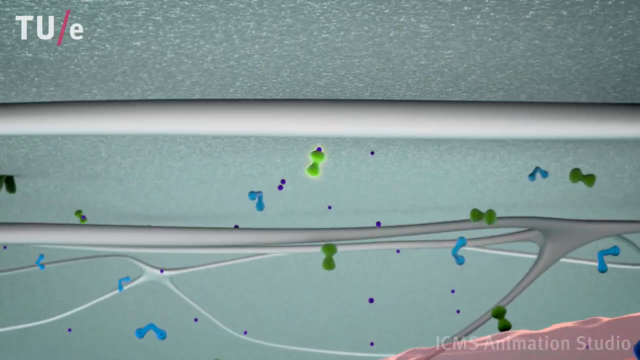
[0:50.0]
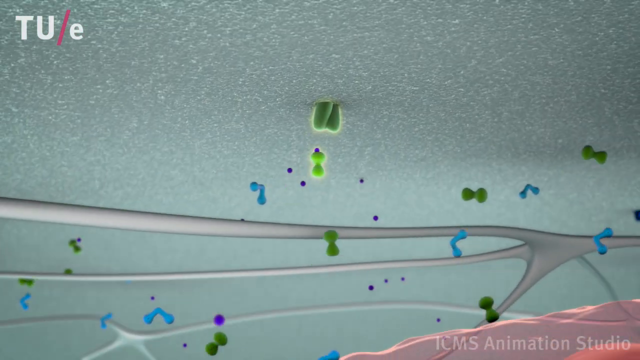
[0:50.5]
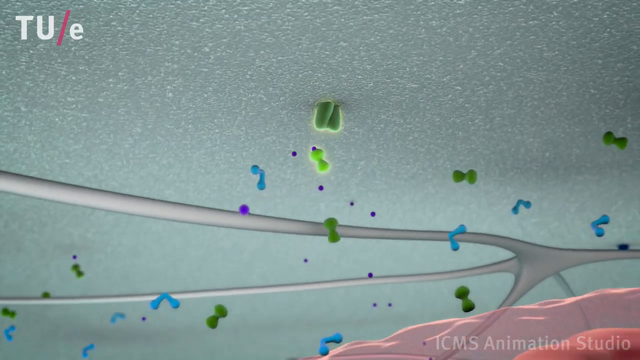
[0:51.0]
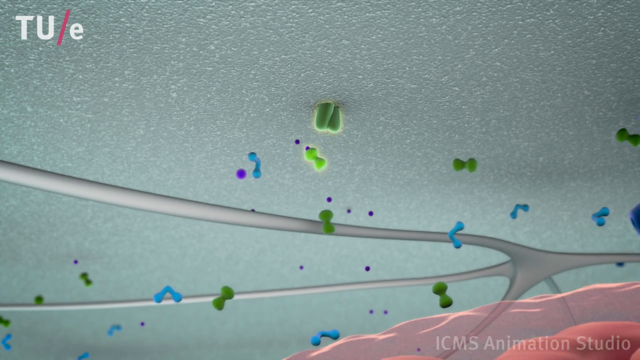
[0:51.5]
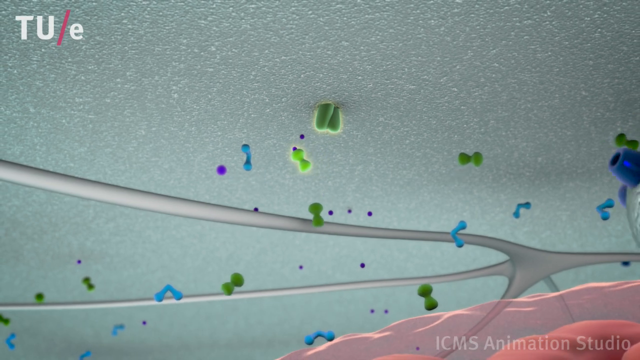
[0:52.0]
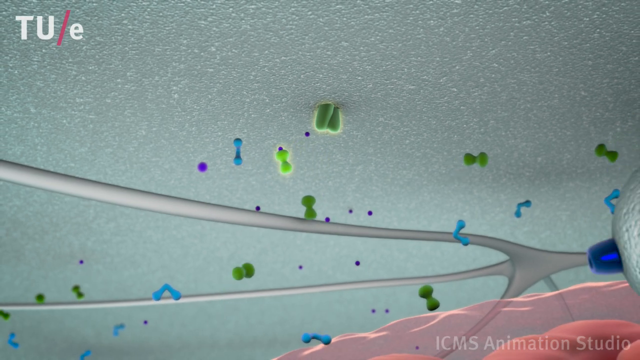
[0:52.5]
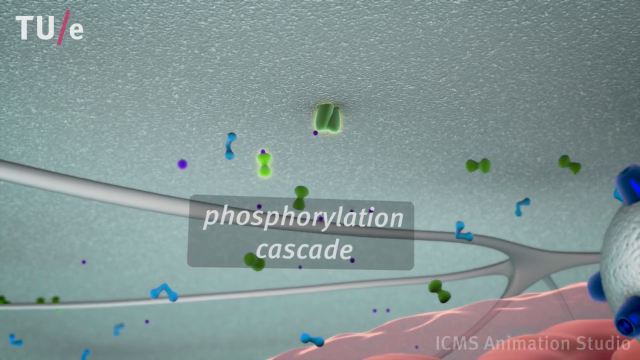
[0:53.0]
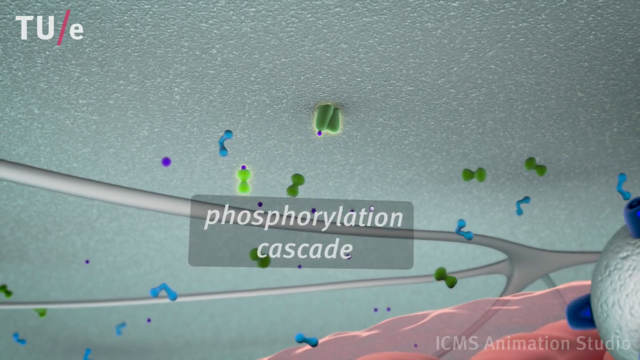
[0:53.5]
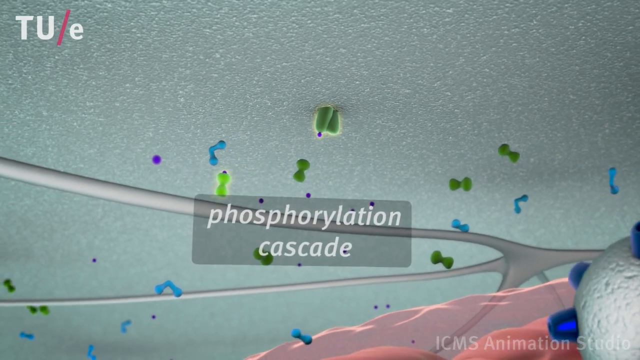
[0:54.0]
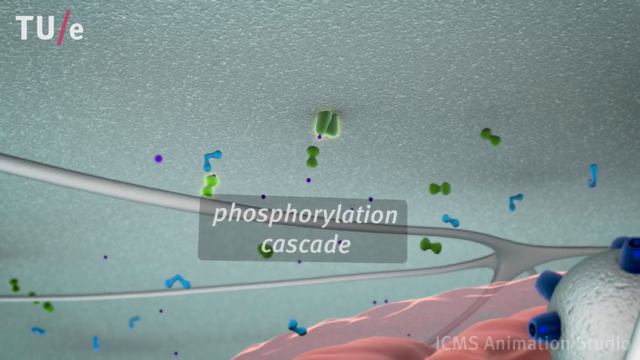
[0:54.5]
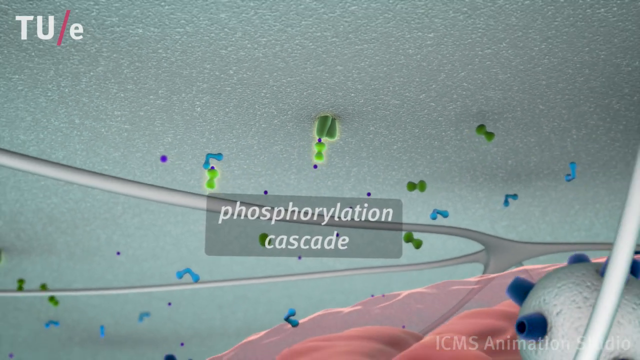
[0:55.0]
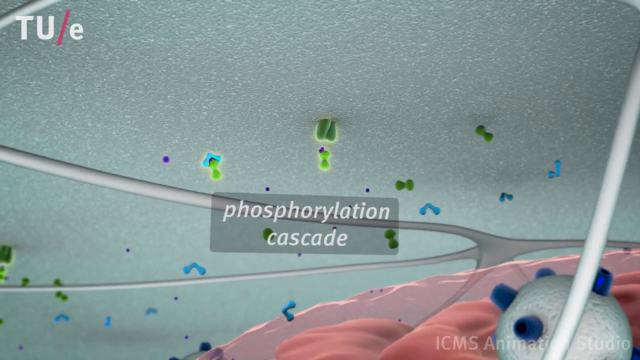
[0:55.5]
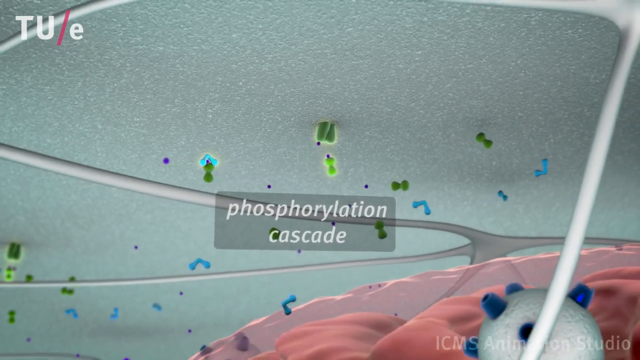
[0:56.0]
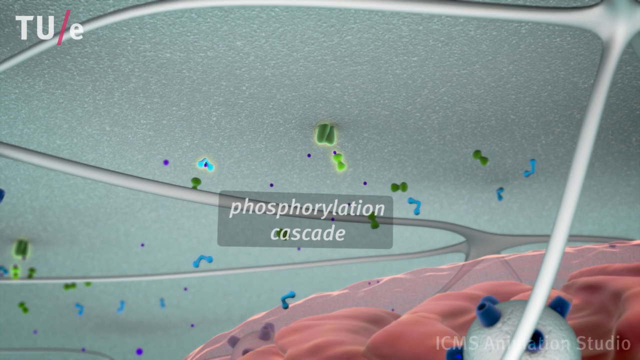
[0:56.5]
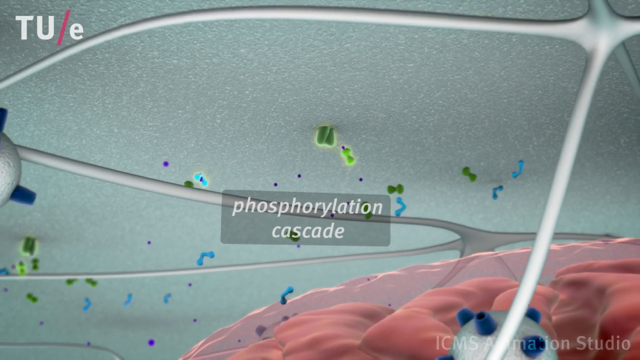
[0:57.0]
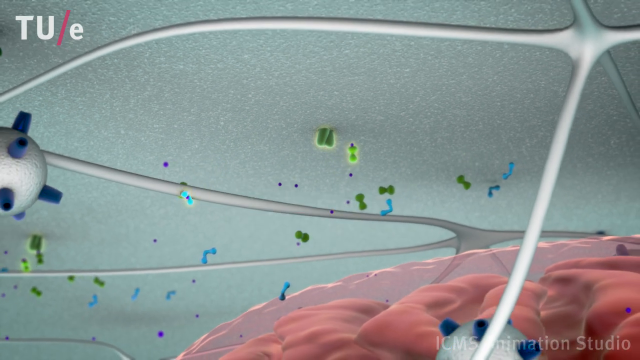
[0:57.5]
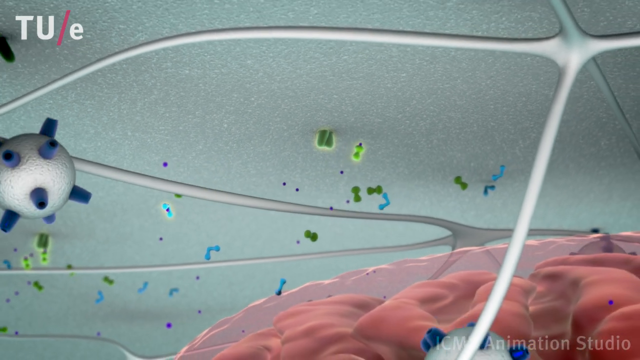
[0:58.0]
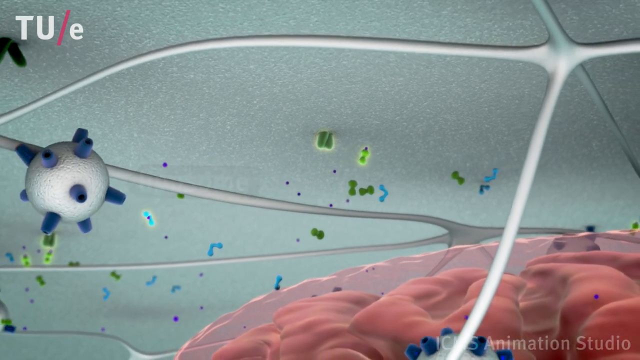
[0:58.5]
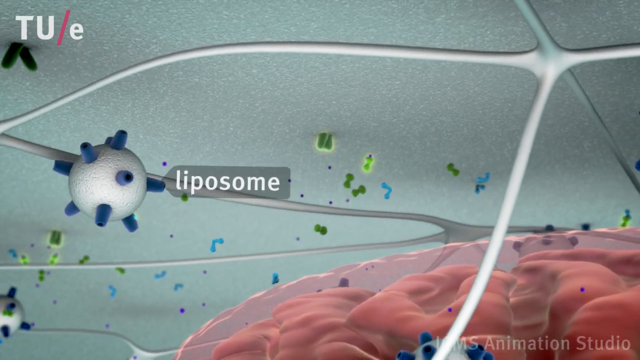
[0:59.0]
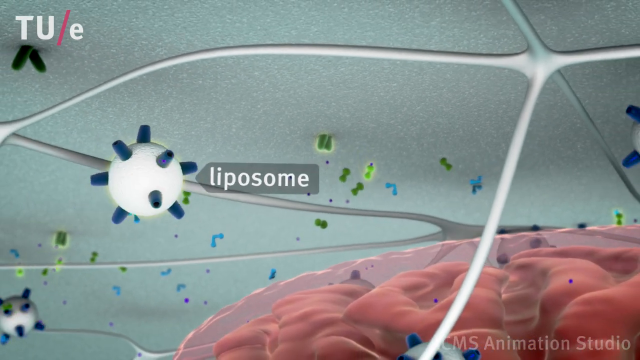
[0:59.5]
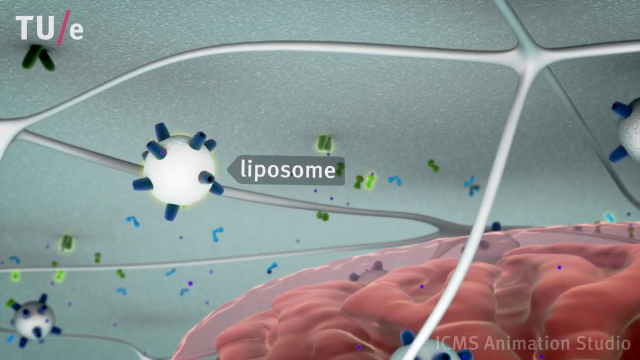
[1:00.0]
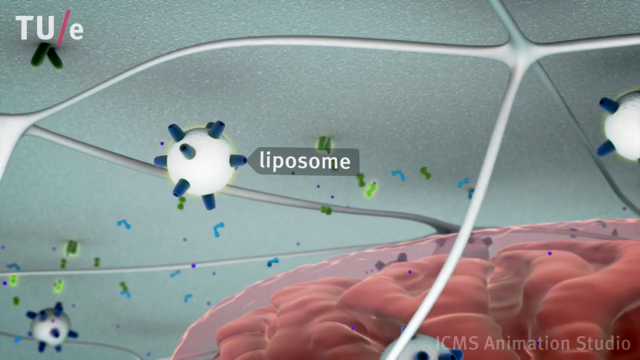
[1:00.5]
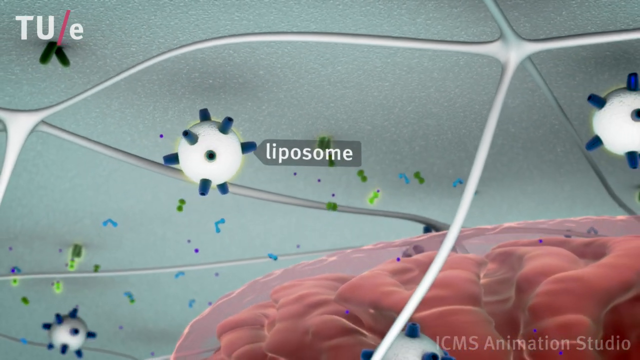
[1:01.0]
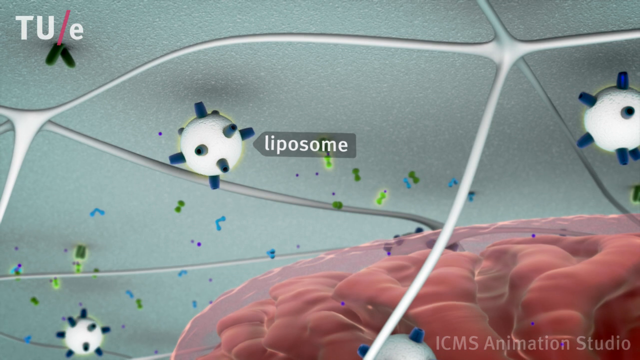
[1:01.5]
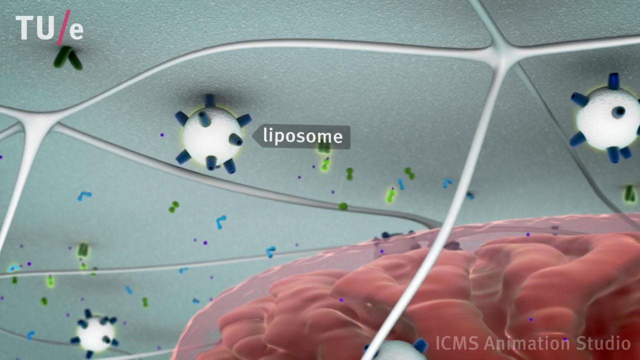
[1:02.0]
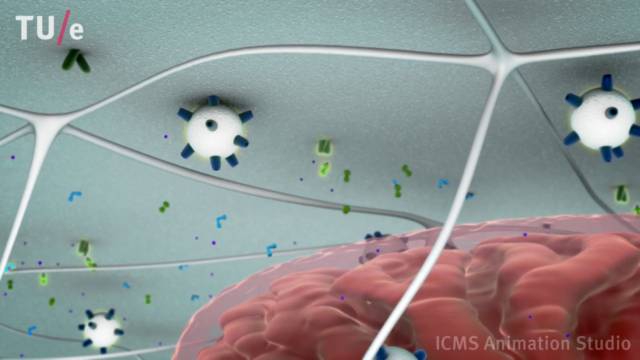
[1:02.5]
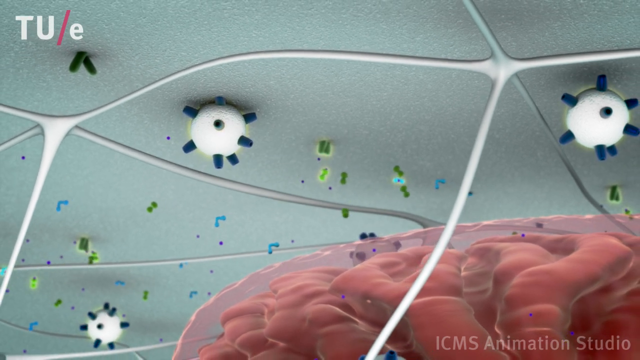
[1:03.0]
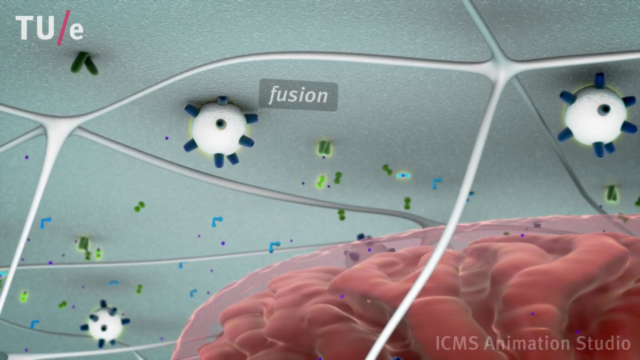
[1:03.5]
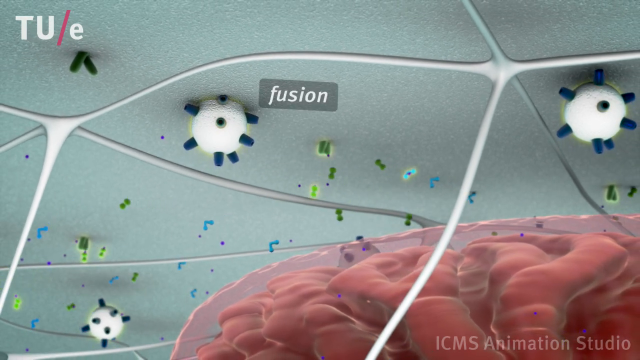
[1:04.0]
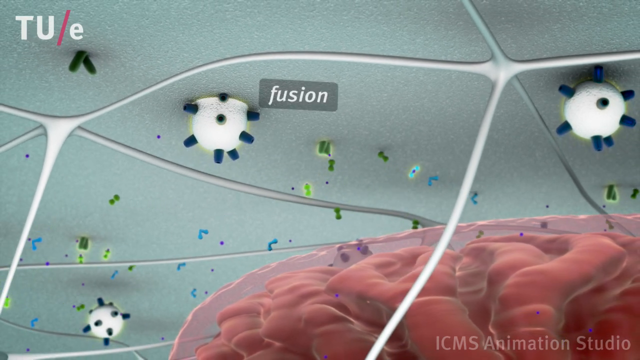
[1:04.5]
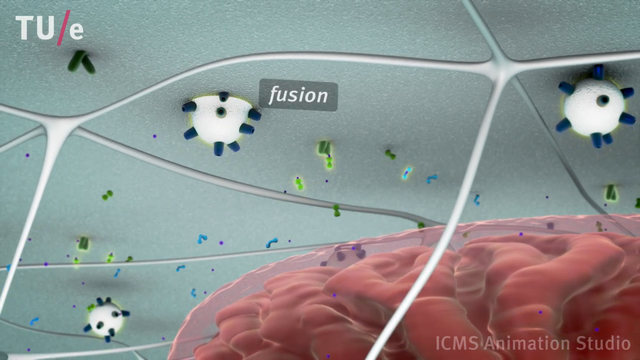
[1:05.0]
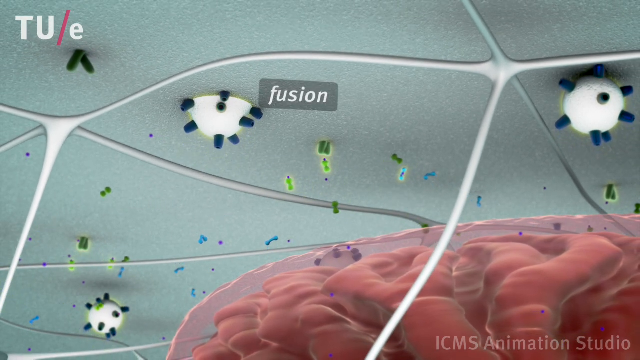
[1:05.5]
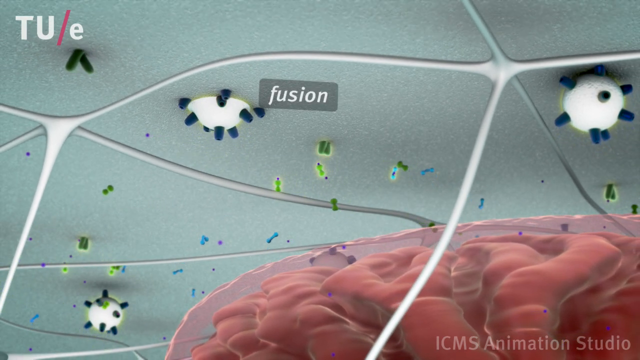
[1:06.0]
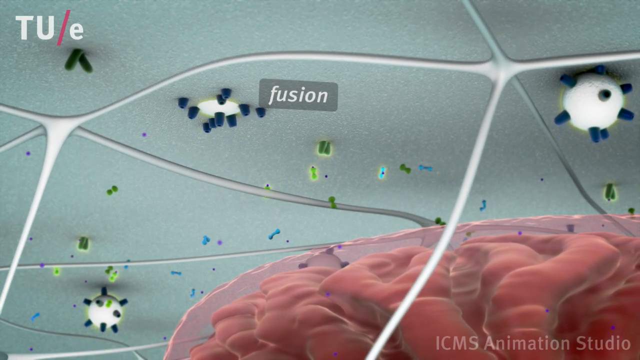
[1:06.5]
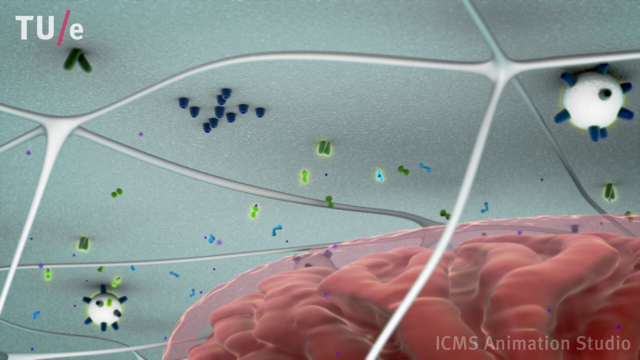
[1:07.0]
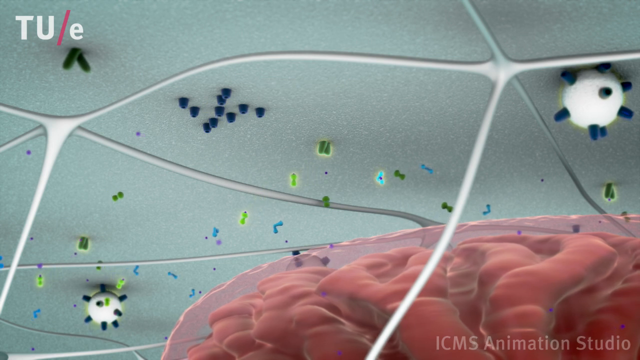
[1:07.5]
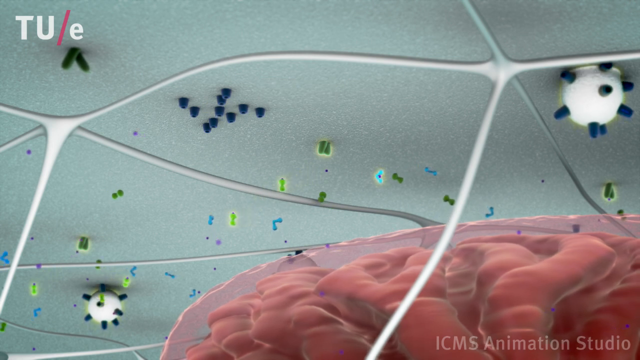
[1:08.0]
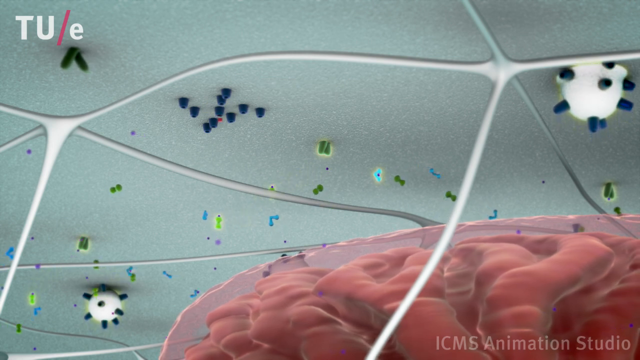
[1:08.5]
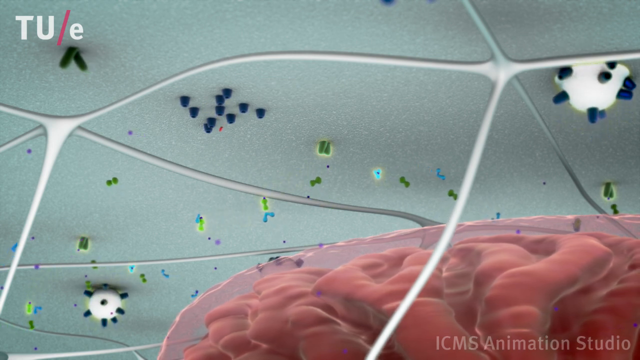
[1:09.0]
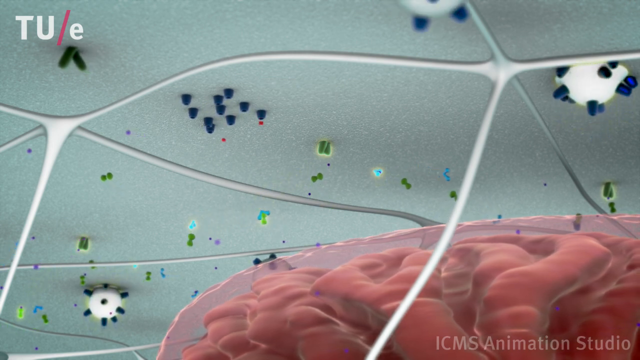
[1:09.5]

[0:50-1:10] The animation, again credited to the technology university, presents phosphorylation information and liposomes, which are balls with spikes on them. Fusion occurs as the liposomes sink in and move through the different cells and muscle groups, not all at the same time but at different times. The phosphorylation cascade appears as many tiny cells moving all over the place. Each part is a different colour: there are purple cells and green things that look almost like barbells. Muscle groups are visible, along with white, highway-looking veins and tendons.